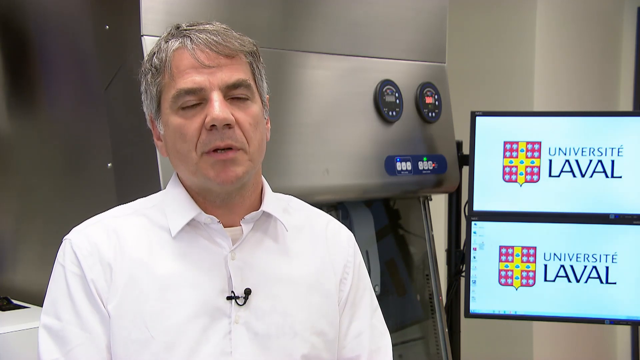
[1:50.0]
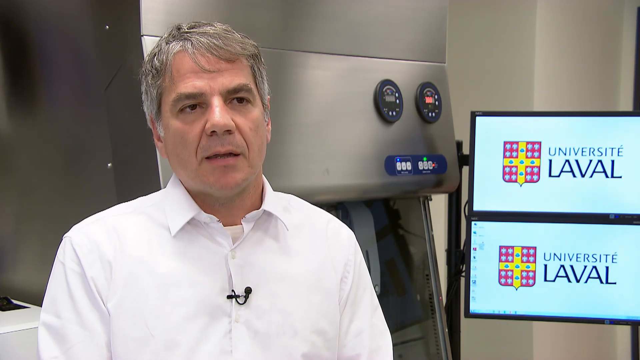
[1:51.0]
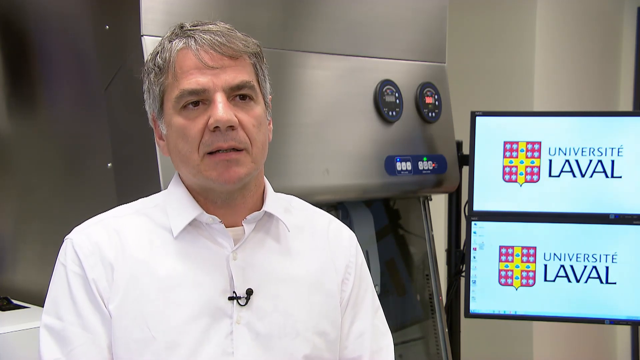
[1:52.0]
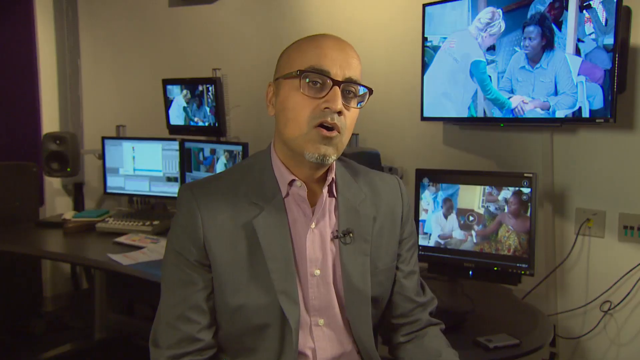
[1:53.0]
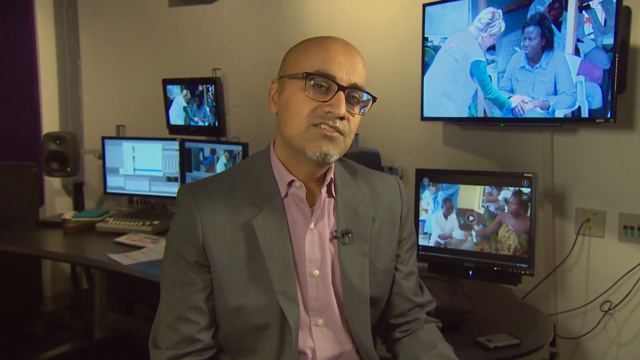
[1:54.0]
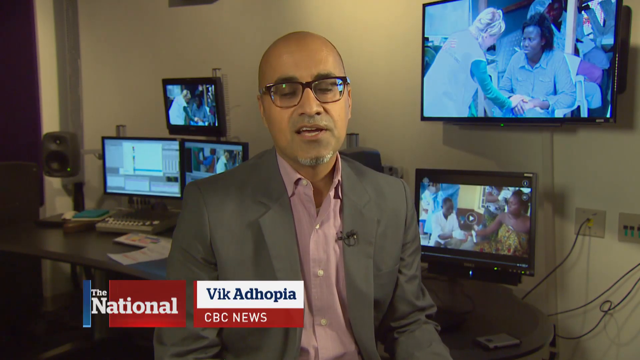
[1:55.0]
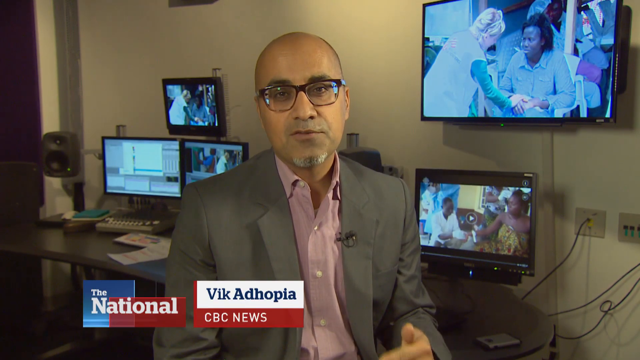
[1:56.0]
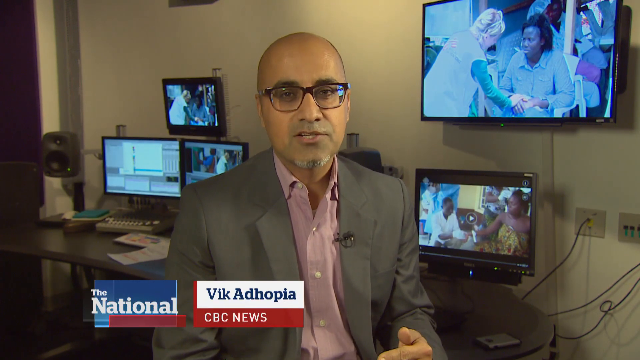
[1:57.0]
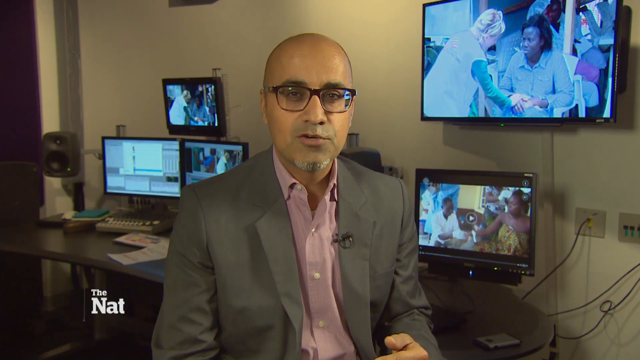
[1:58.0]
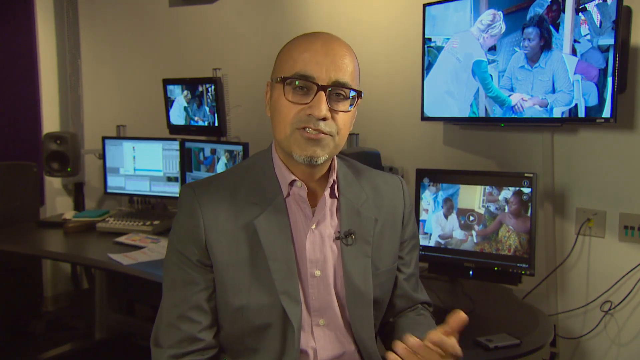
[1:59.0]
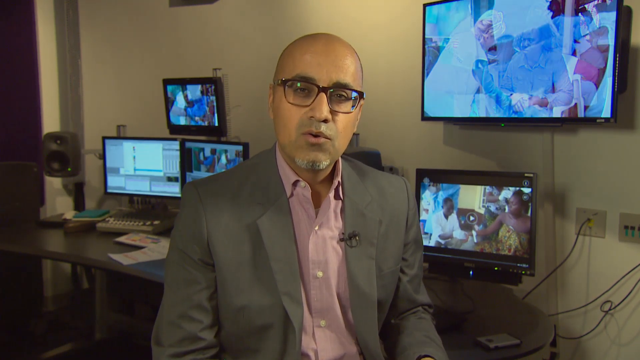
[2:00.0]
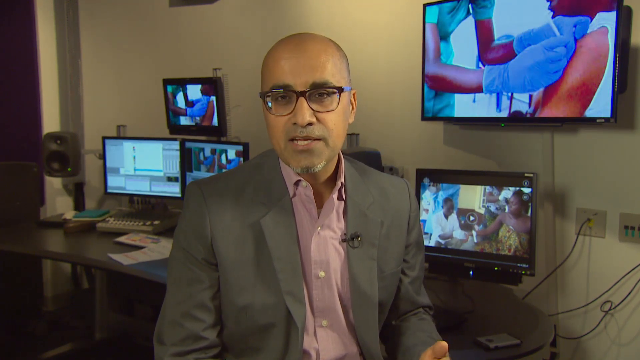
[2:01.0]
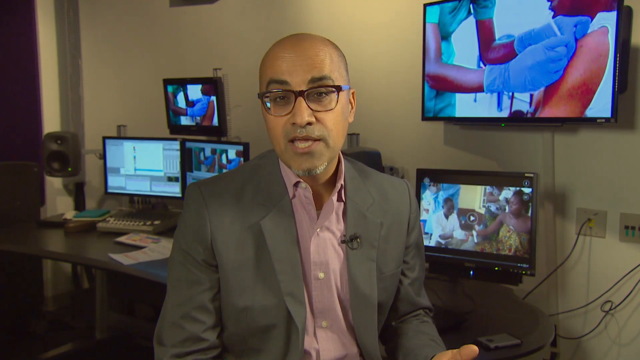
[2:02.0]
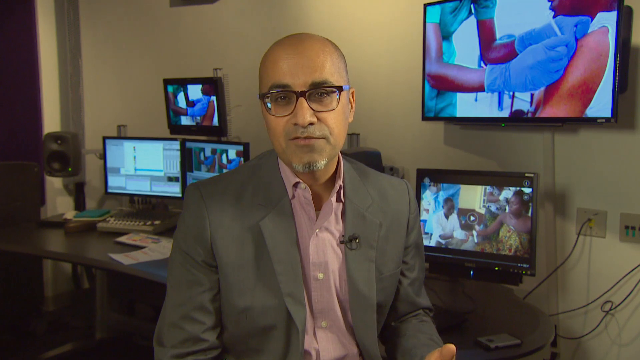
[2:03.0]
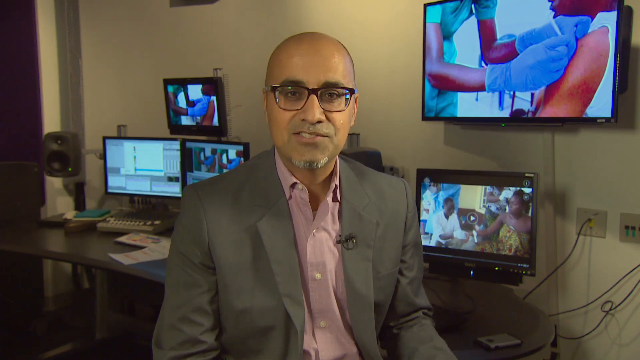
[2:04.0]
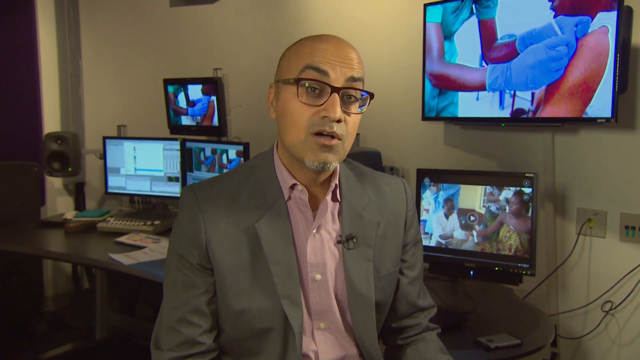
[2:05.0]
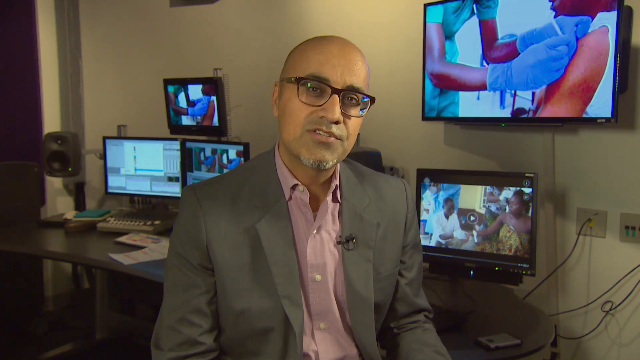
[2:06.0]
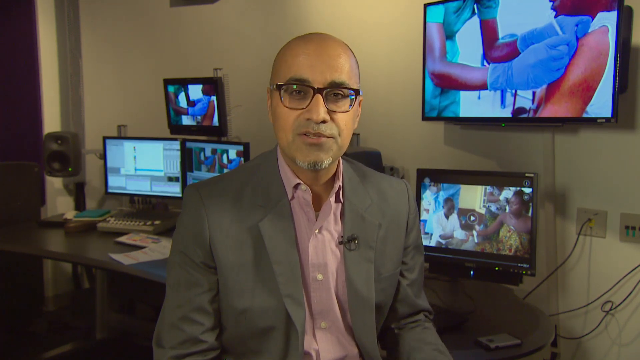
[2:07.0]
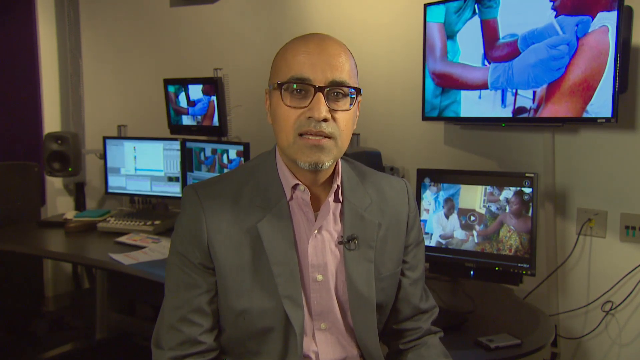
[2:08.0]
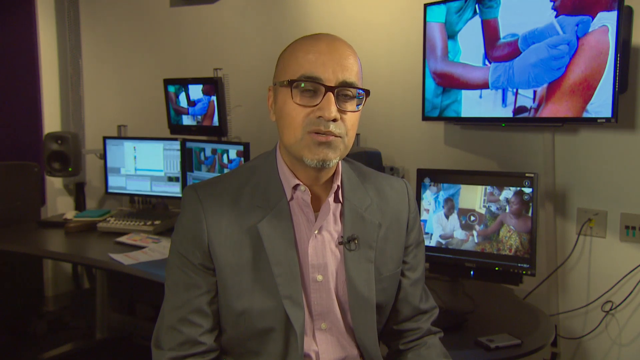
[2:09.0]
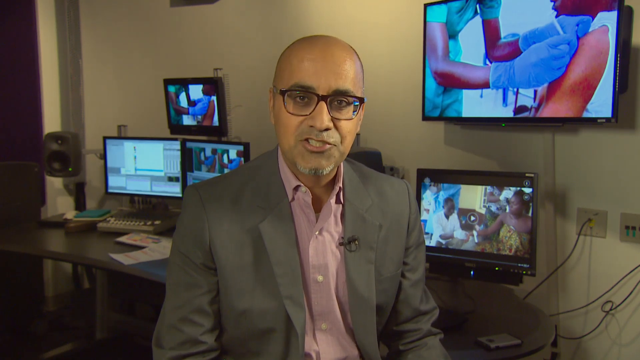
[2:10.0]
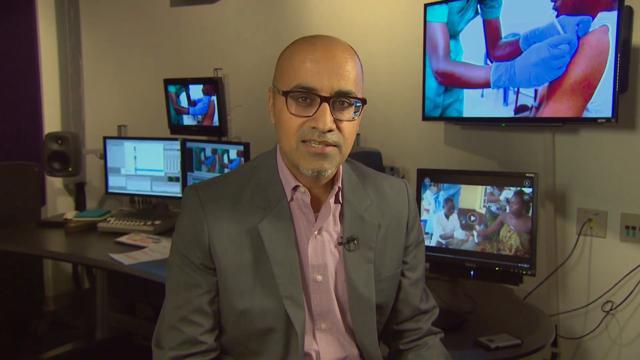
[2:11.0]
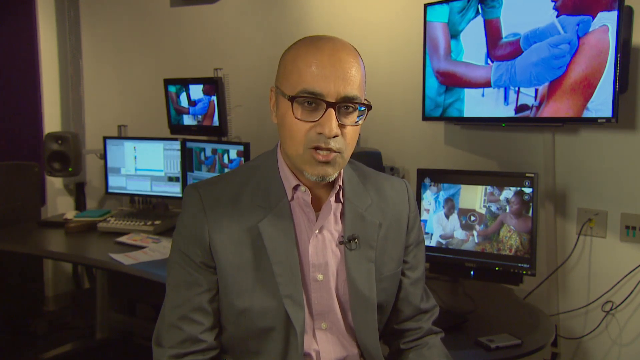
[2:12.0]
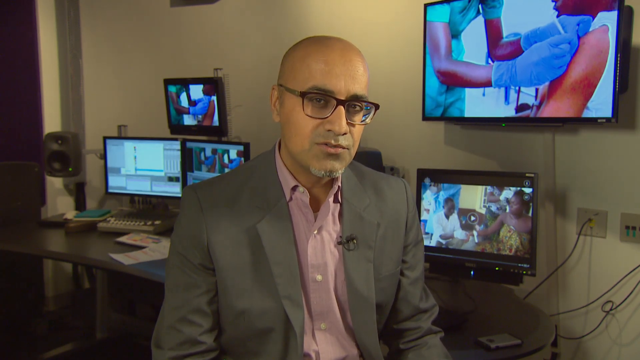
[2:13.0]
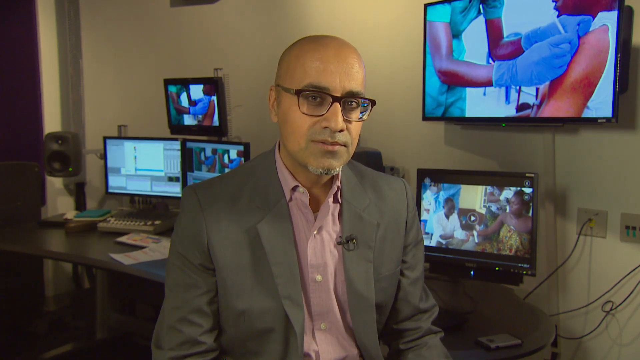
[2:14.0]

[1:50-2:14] A man in a white collared shirt with a small black microphone clipped to it appears to be talking into the camera. Behind him is large metal machinery with some blinking lights, and to his side are screens that say "University LaVal." The video switches to another man wearing glasses and a gray suit jacket, also with a small black microphone clipped on, talking into the camera. Behind him are many computer and TV screens showing images, many of them of people getting shots in their arms. At the bottom of the screen it says "The National," and then his name pops up along with "CBC News."